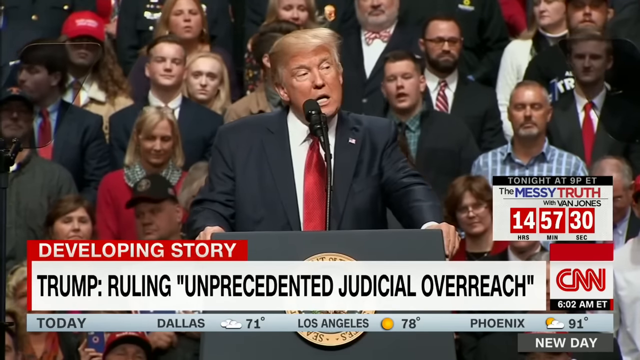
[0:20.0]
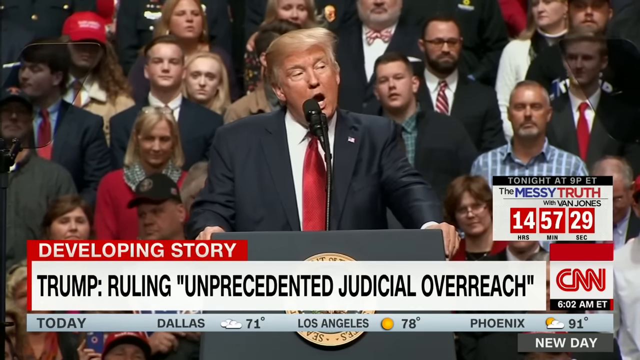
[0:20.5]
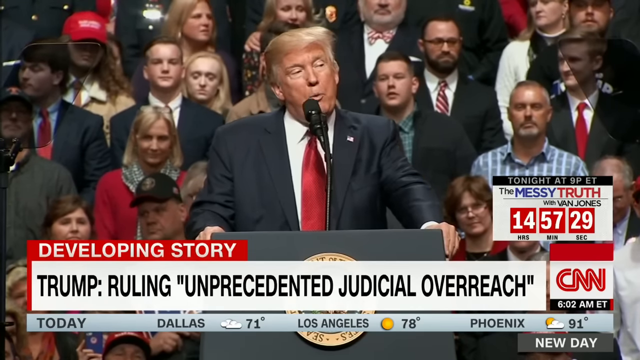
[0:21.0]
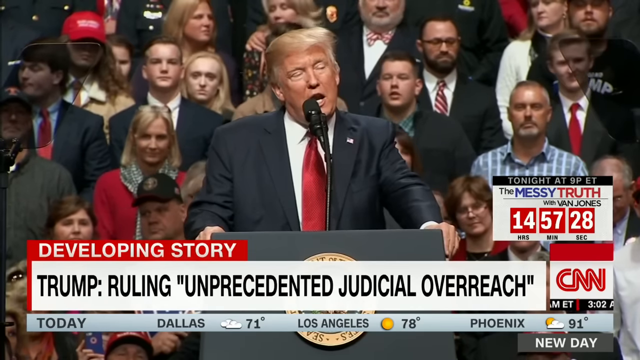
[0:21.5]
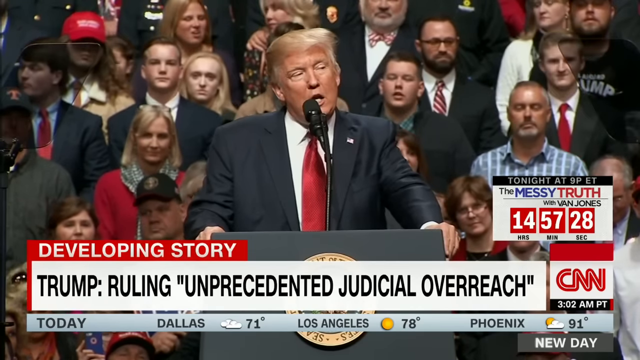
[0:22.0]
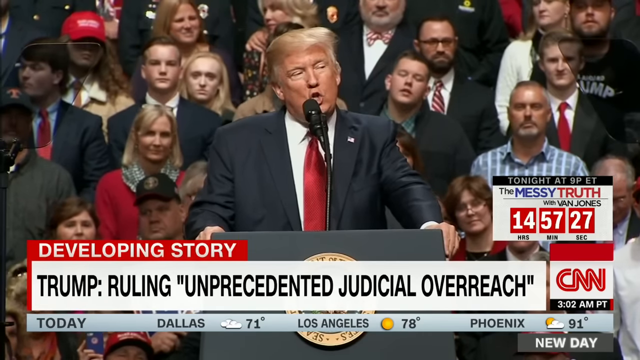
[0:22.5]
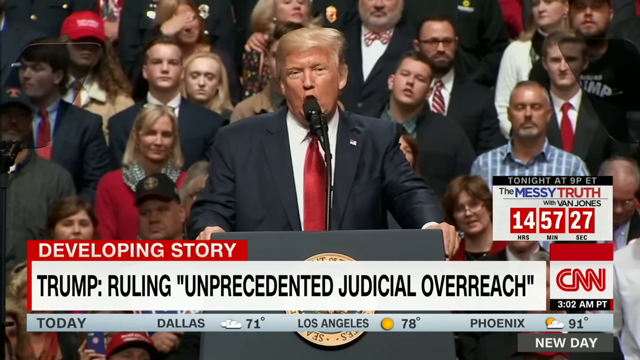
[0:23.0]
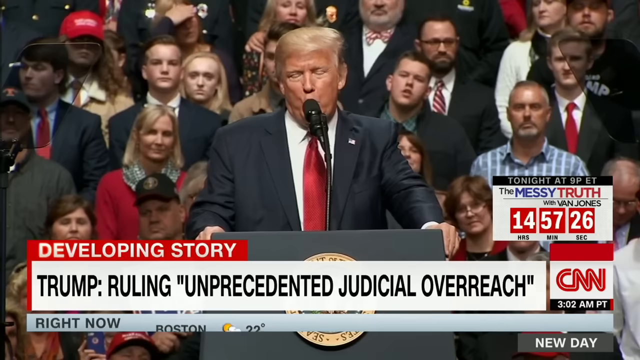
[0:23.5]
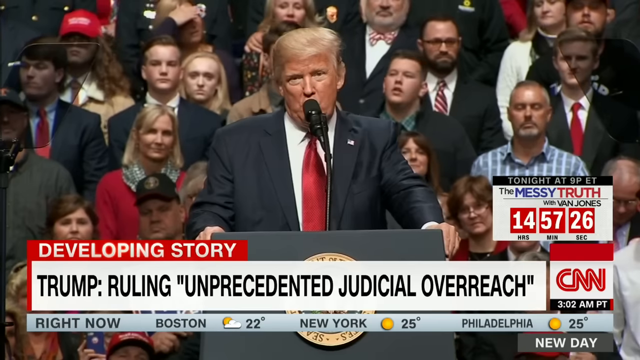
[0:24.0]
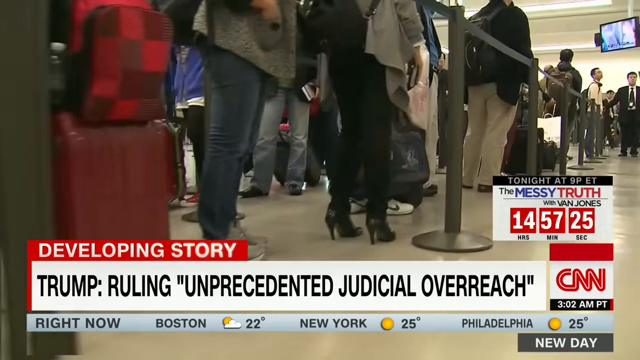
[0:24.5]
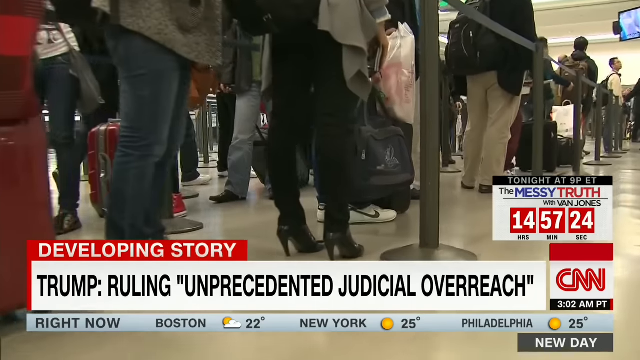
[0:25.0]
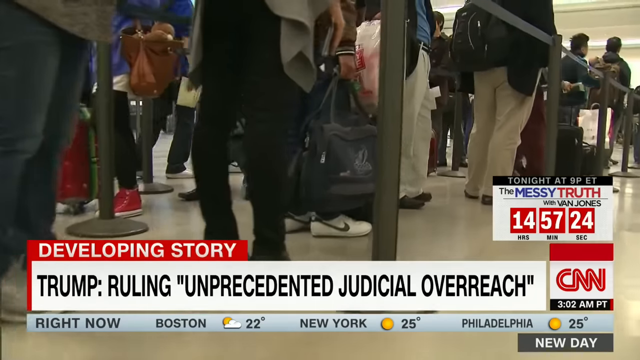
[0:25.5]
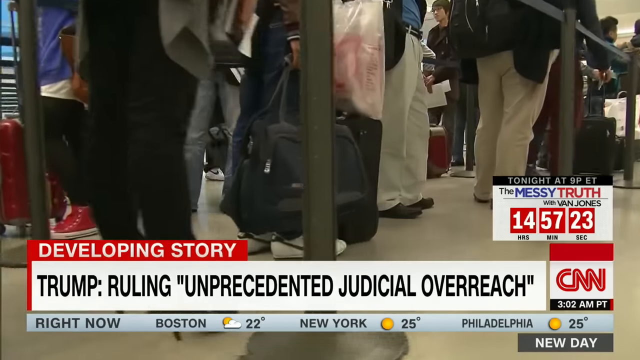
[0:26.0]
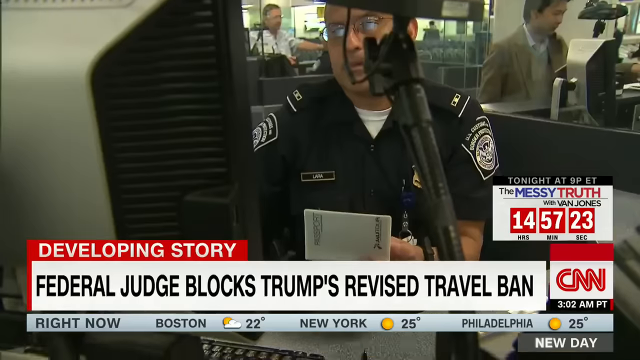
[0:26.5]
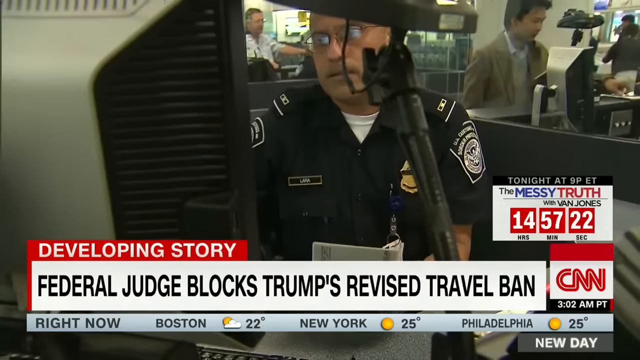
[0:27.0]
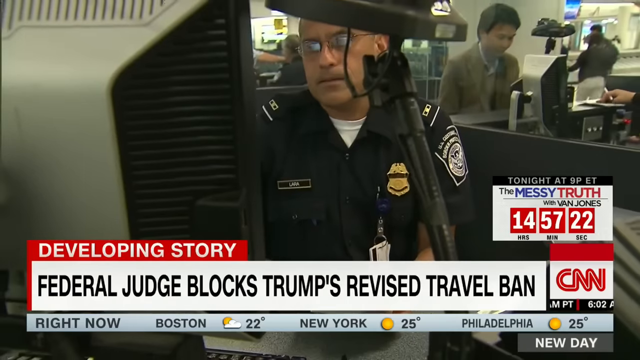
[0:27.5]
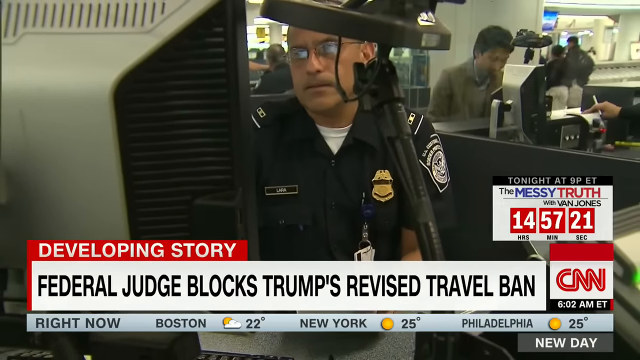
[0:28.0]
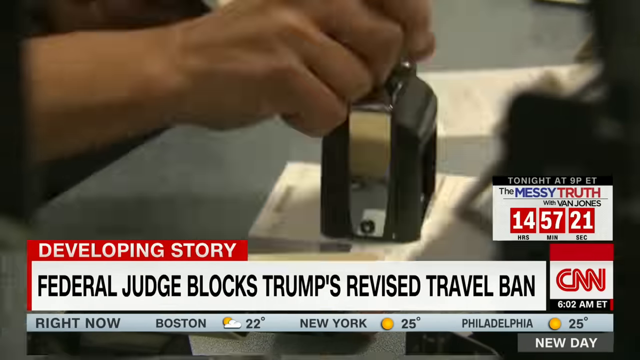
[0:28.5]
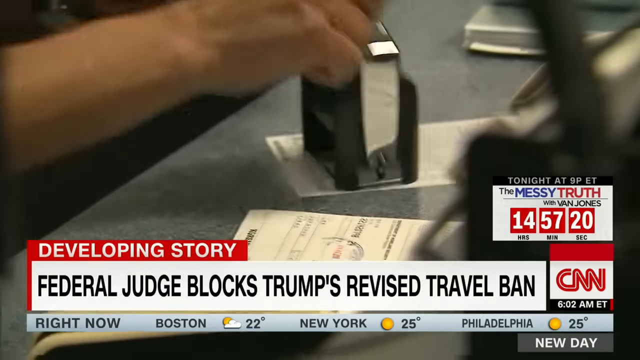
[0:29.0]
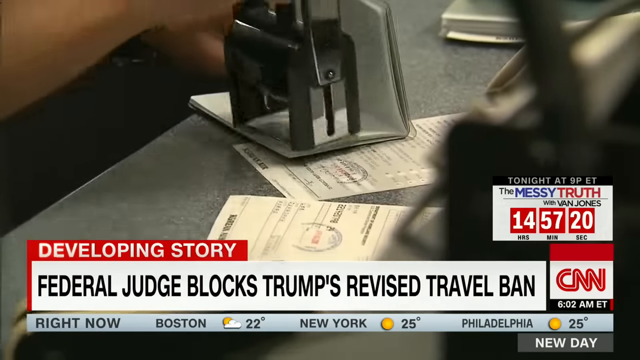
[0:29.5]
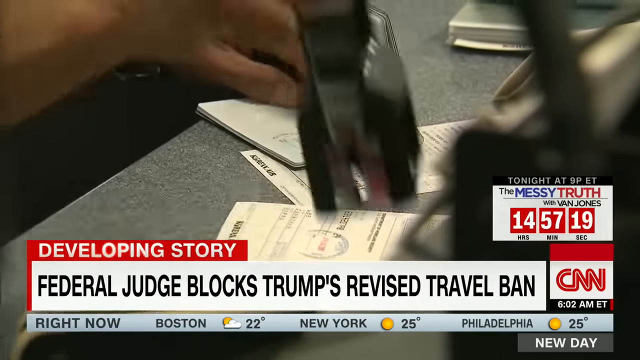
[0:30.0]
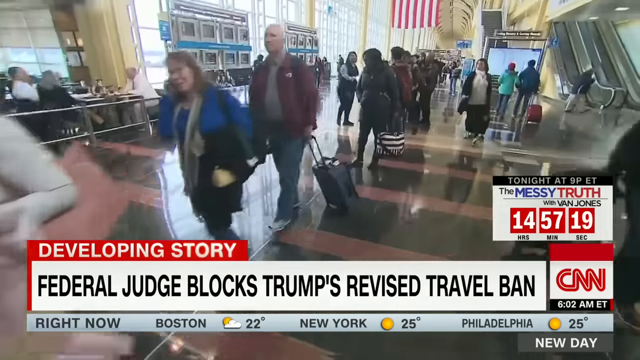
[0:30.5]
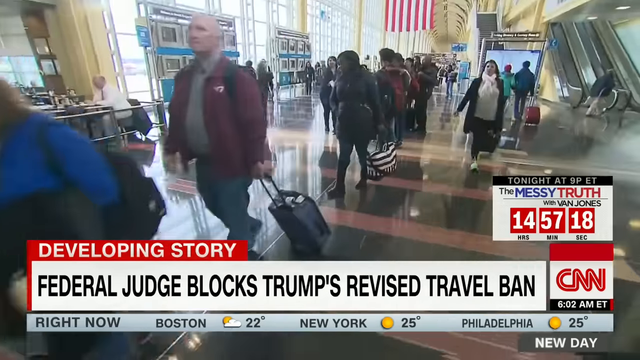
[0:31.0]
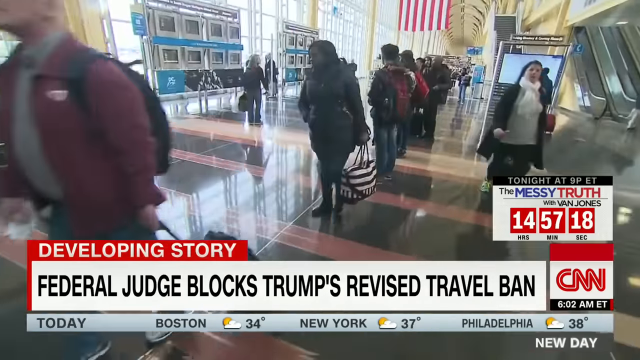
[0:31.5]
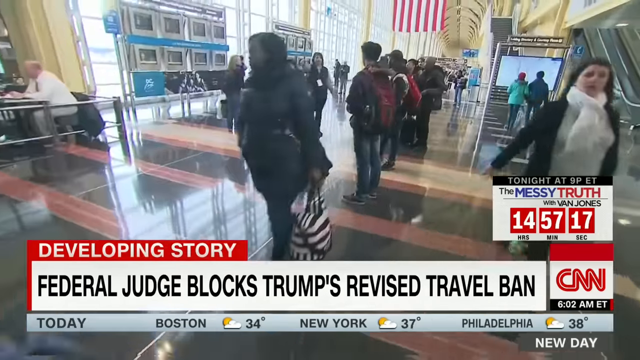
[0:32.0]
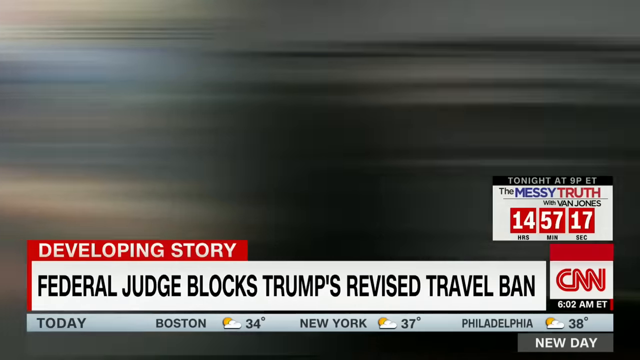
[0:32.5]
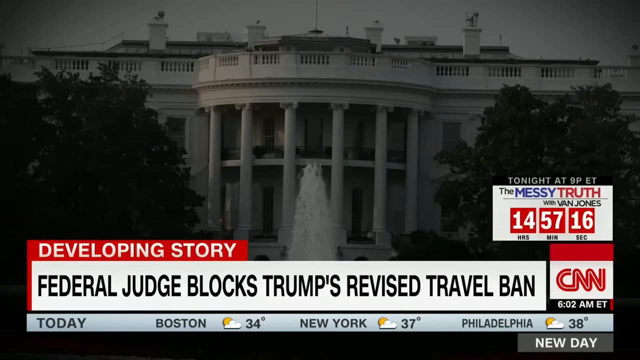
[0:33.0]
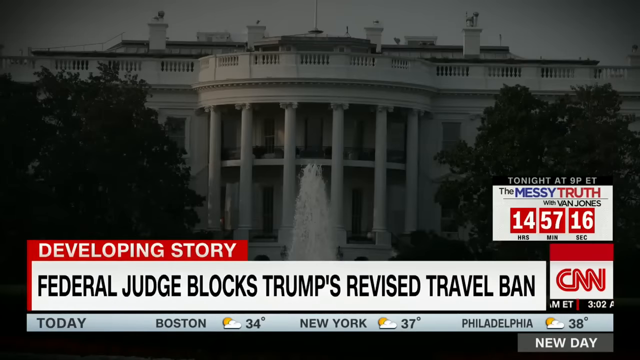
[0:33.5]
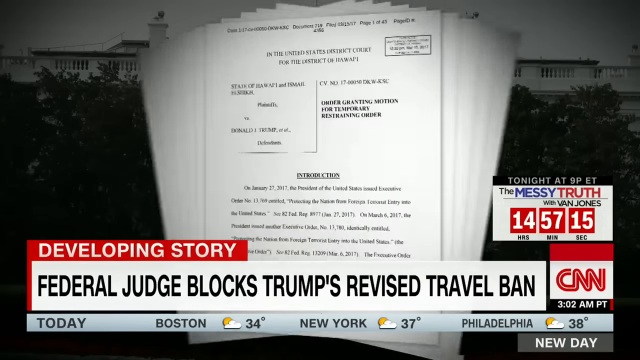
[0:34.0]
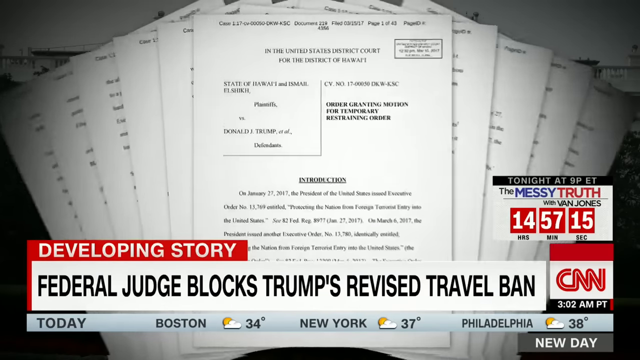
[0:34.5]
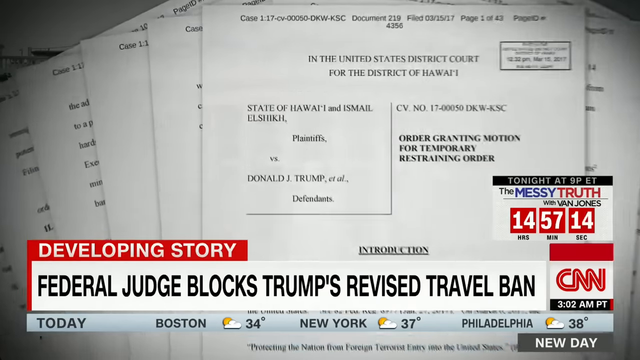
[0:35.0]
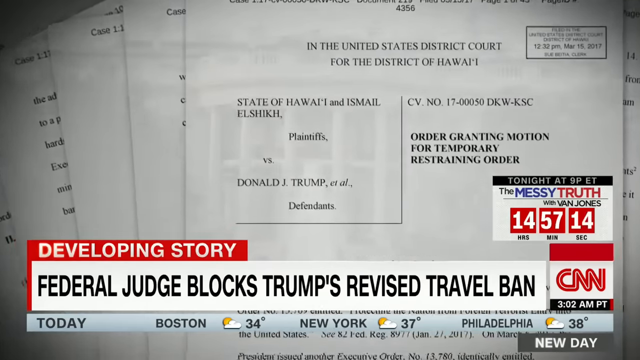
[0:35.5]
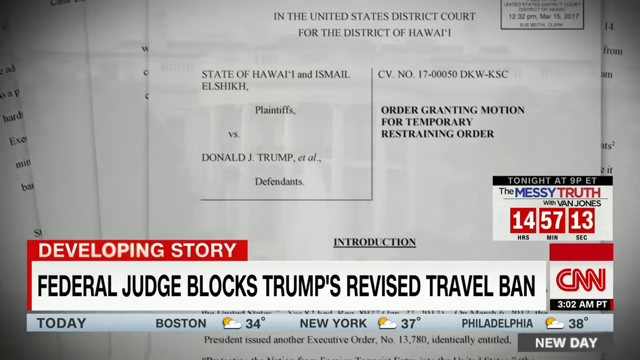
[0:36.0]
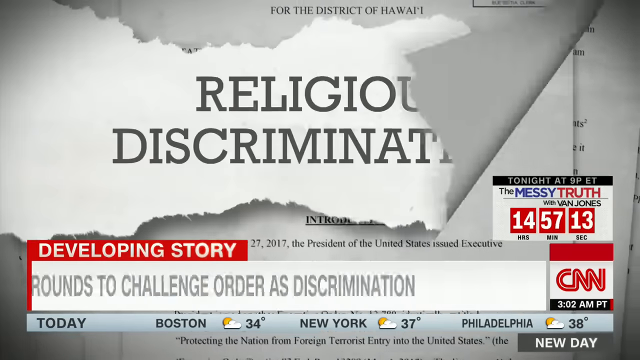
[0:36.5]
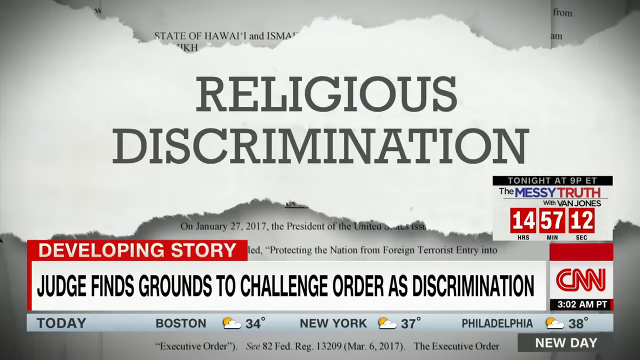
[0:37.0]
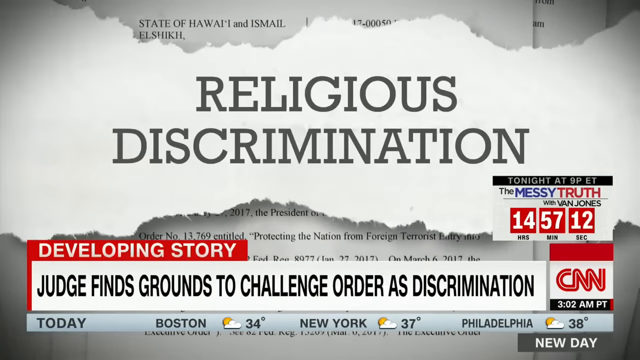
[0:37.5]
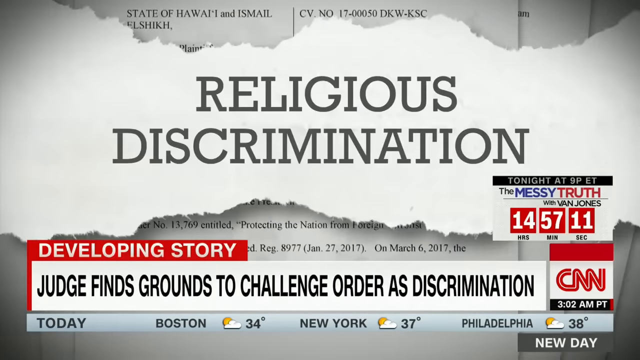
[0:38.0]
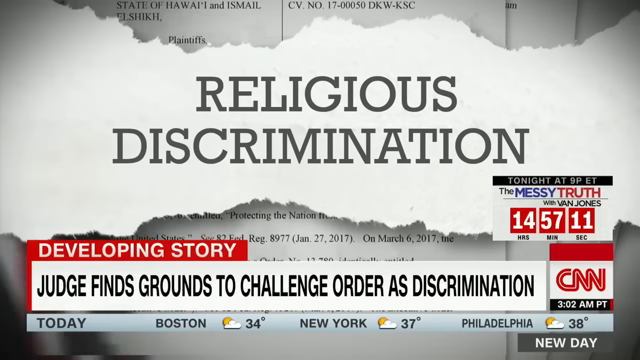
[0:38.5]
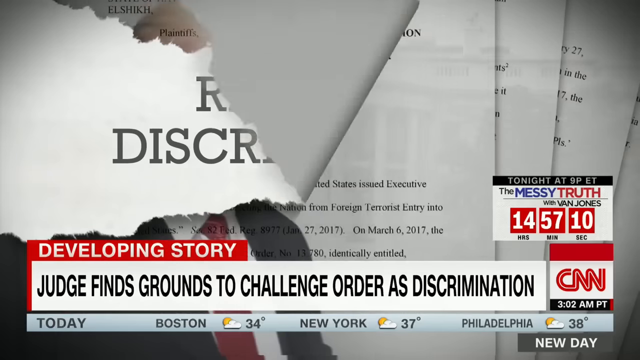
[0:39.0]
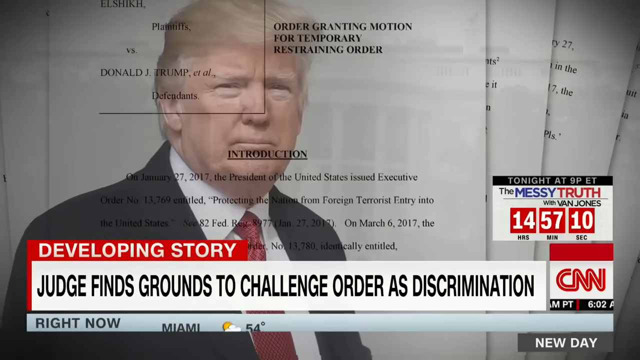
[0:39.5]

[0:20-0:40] The news story appears to be about Donald Trump's travel ban. A caption on the screen states that a federal judge blocked Trump's revised travel ban. B-roll stock footage shows TSA and people milling about an airport.